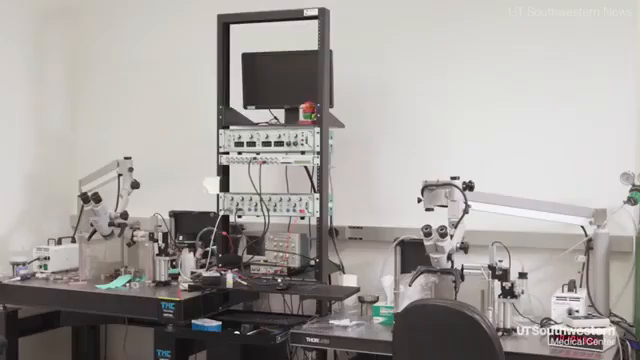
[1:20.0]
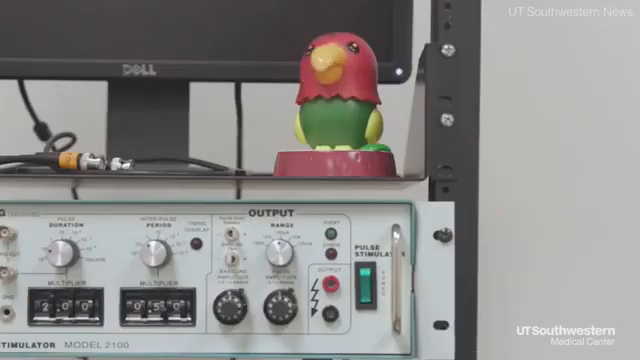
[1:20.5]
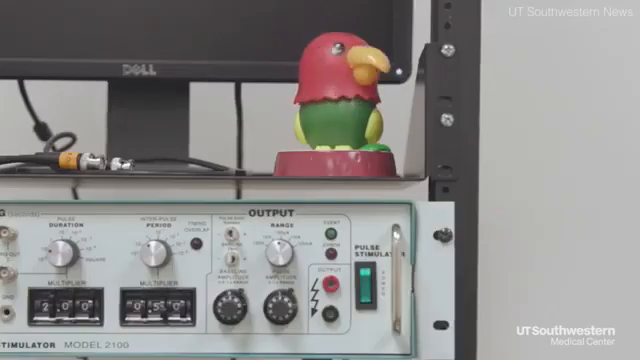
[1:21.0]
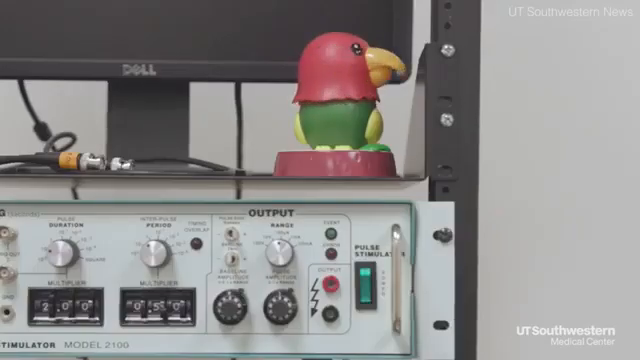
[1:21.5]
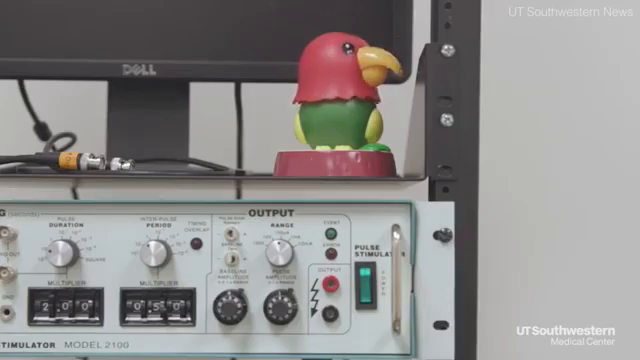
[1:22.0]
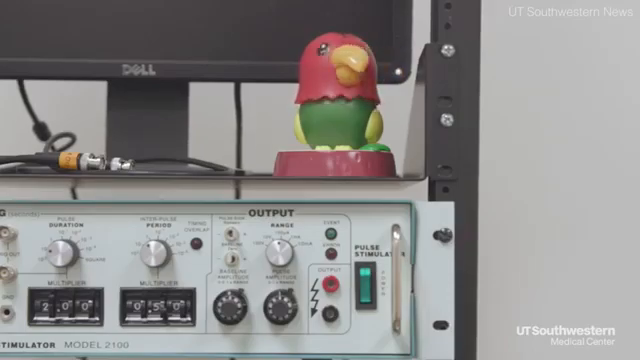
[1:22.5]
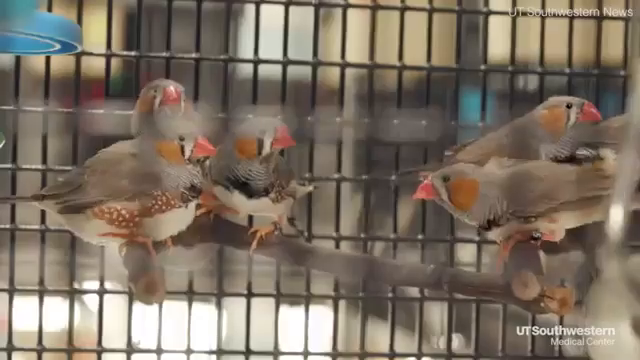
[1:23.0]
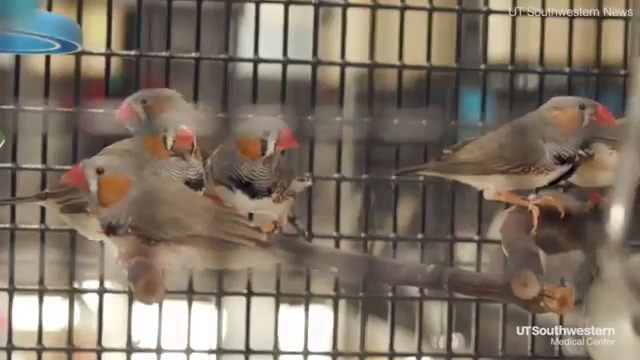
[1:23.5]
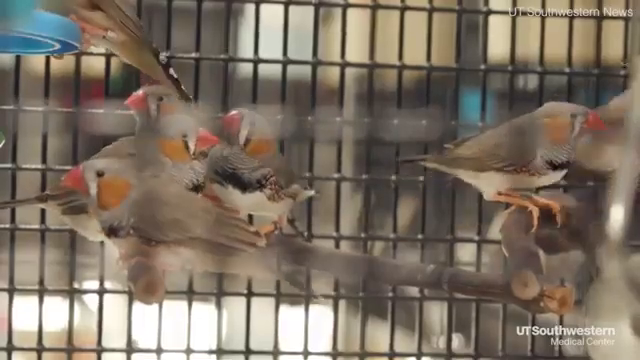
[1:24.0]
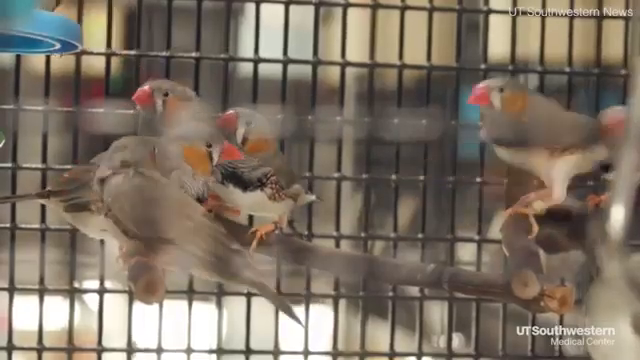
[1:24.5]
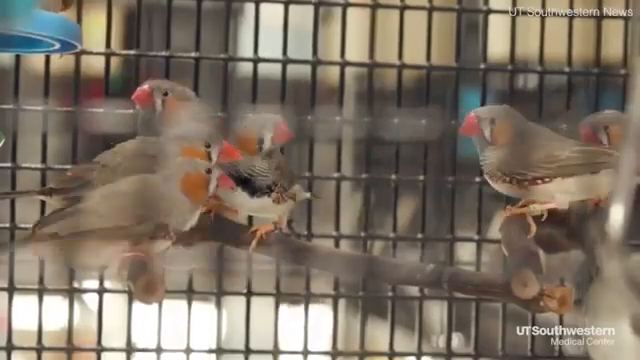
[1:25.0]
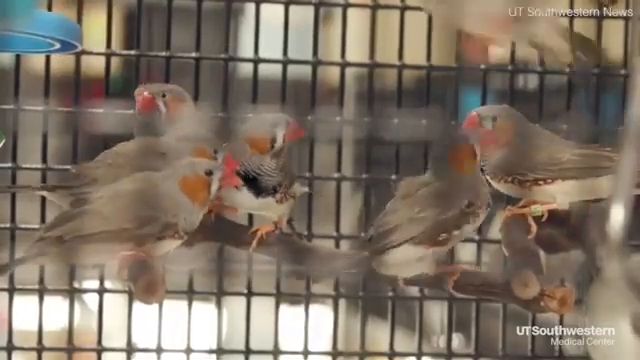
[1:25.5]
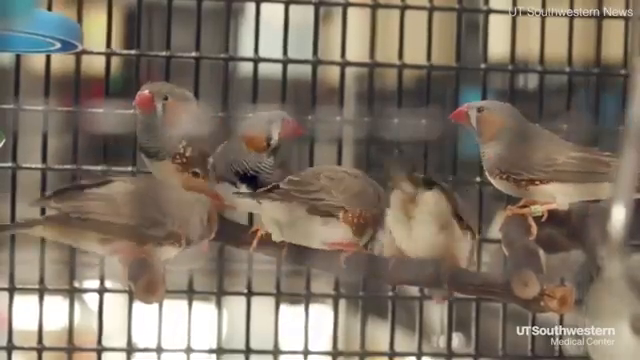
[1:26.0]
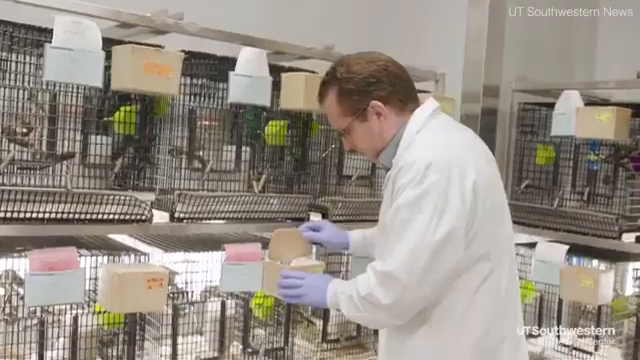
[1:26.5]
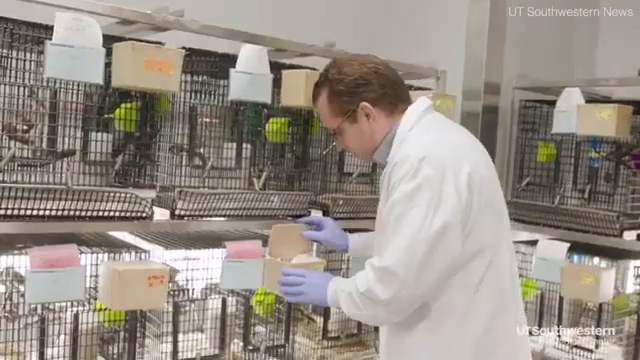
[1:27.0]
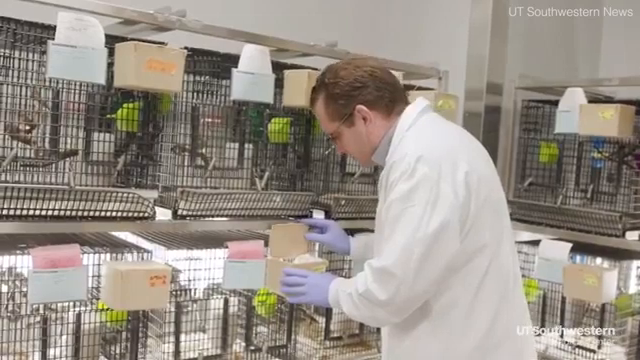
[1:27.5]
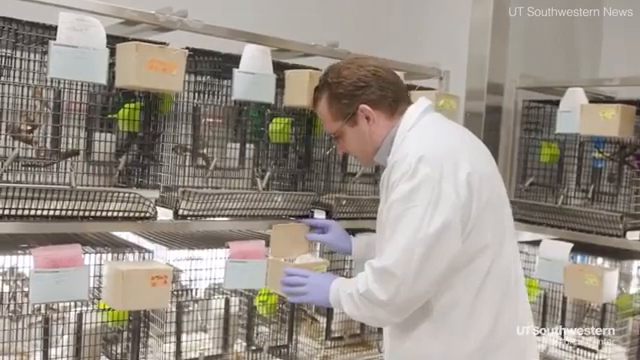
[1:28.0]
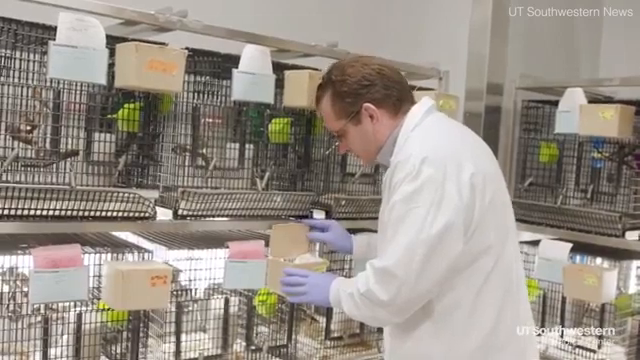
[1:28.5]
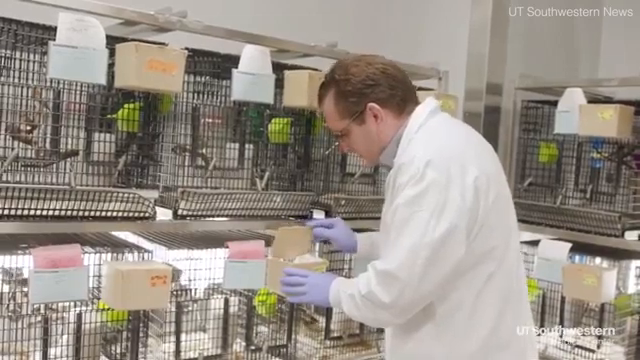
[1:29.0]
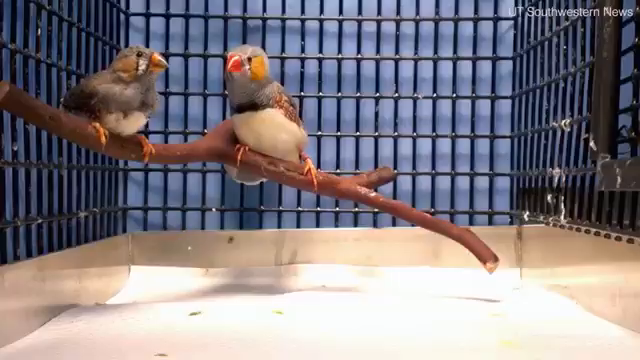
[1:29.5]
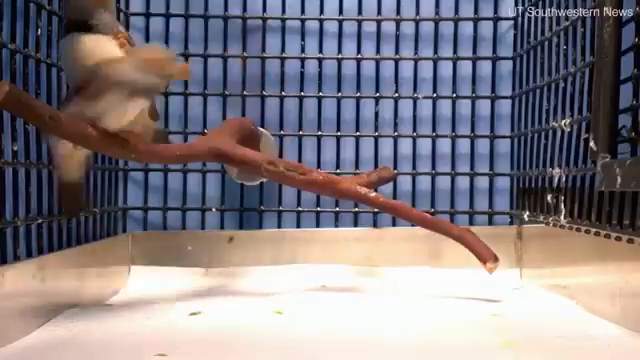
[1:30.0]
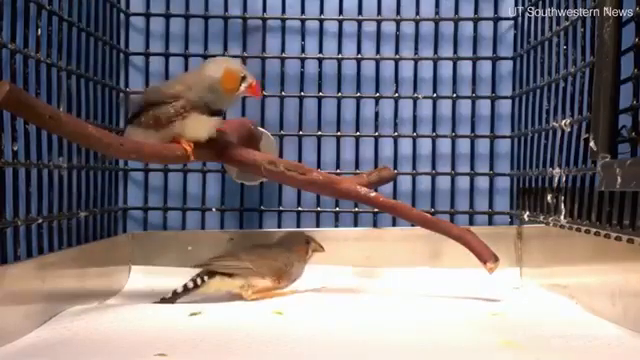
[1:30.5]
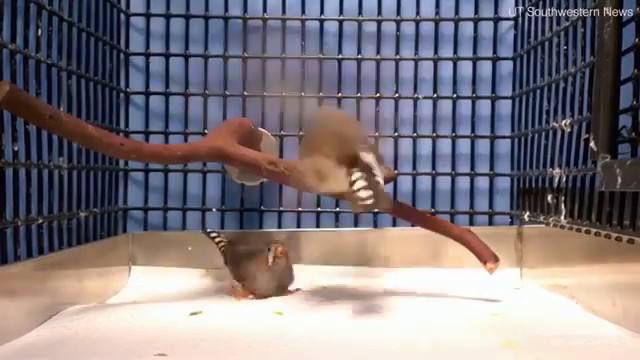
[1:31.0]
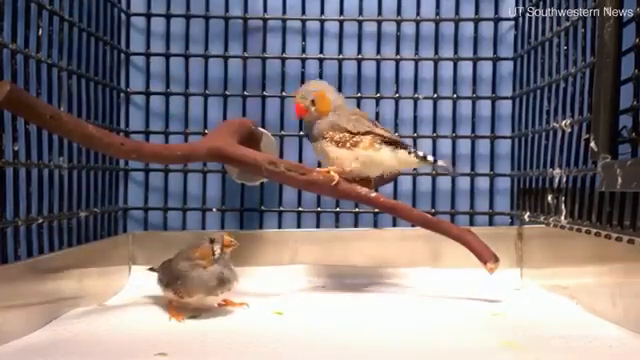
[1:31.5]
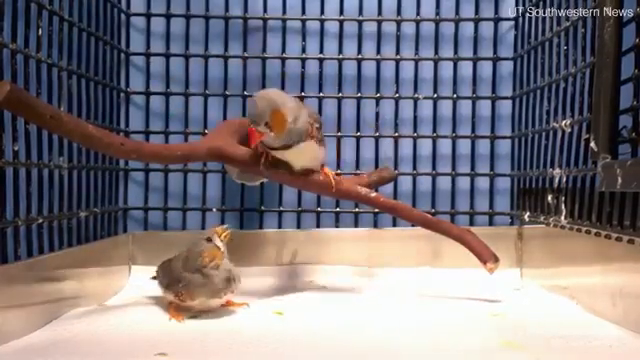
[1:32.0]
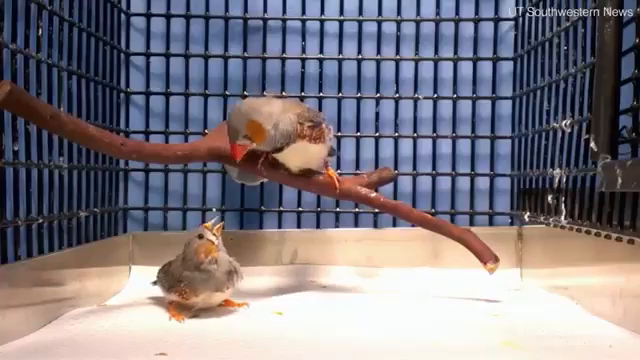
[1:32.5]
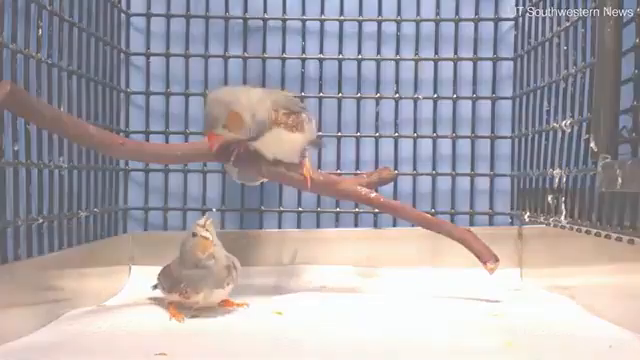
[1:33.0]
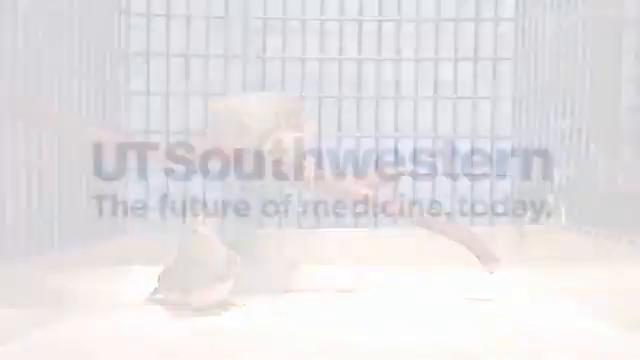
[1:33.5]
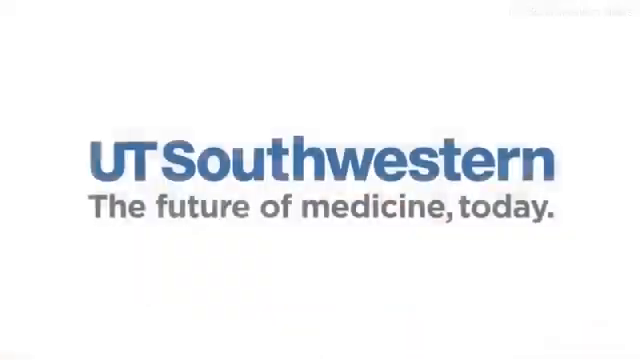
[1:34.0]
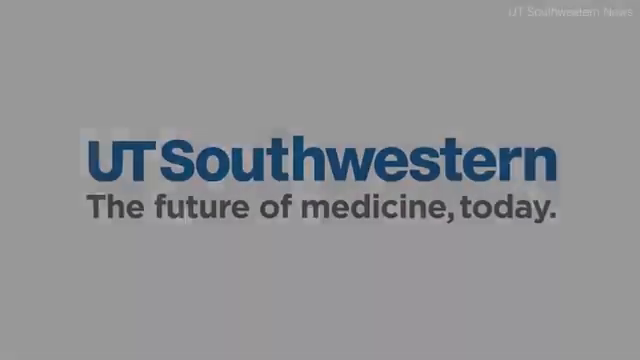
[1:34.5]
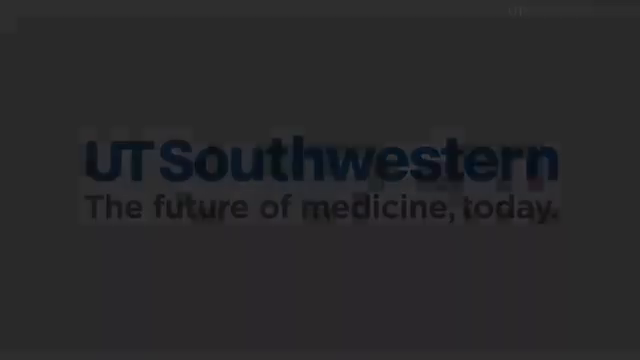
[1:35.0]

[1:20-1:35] Back in a lab, there seems to be a computer screen on top of equipment that almost looks like an old stereo, with one layer and then another layer full of openings like an old phone switchboard. Two microscopes have really long arms that can rotate around, and a bunch of other unidentified equipment is there. A close-up shows a toy bobblehead bird with a red base, a green body, yellow rings, a red face, and a yellow beak; its head swivels back and forth. The view returns to the birds in the cages, which are sort of gently flying all around. Then about eight or nine cages are shown, with little boxes attached to them; the doctor is in the white coat and rubber gloves and appears to be looking in a box. The video ends with "UT Southwestern."